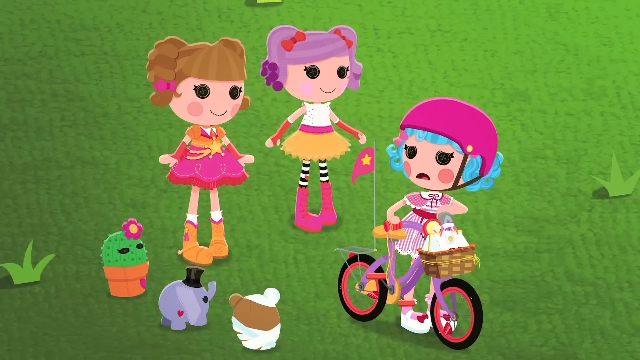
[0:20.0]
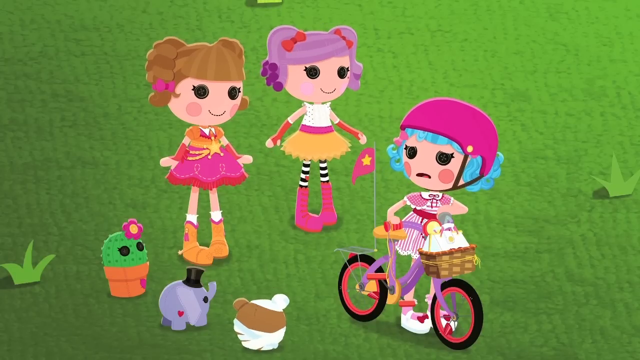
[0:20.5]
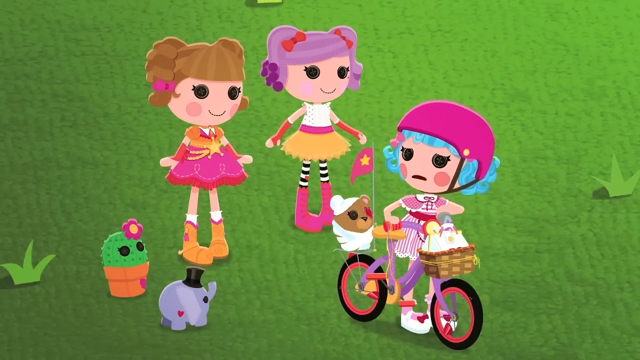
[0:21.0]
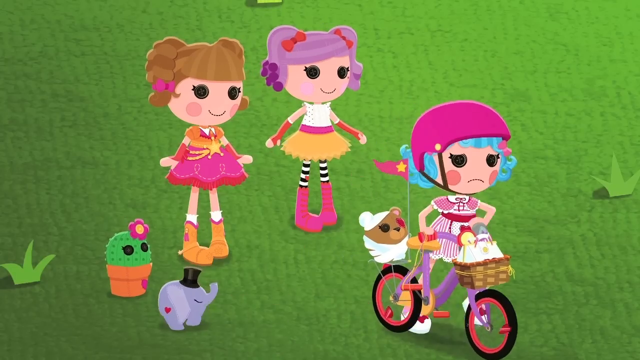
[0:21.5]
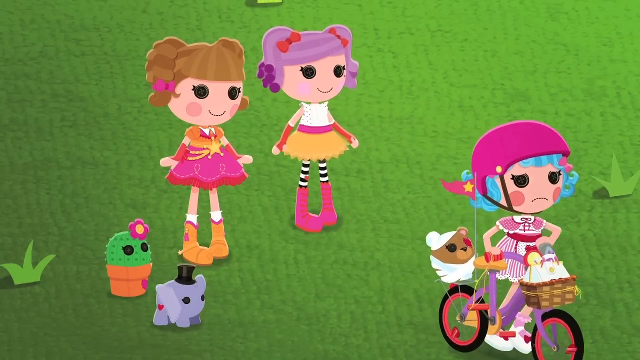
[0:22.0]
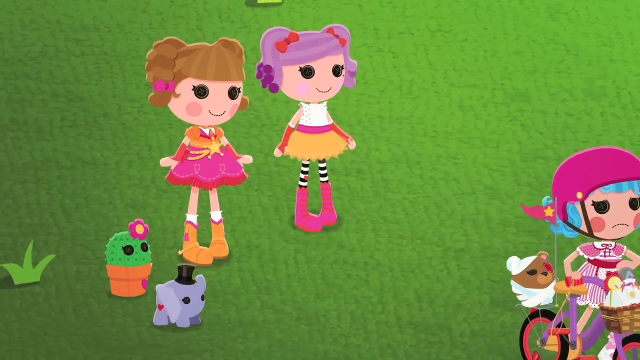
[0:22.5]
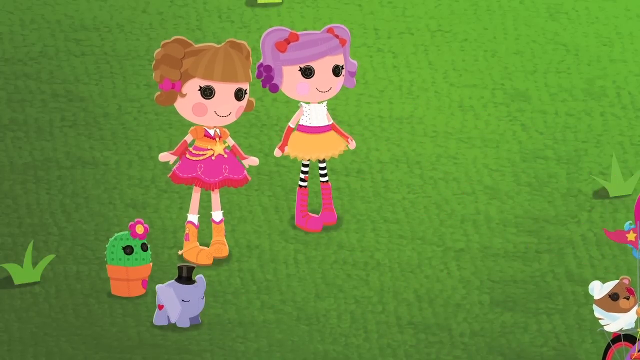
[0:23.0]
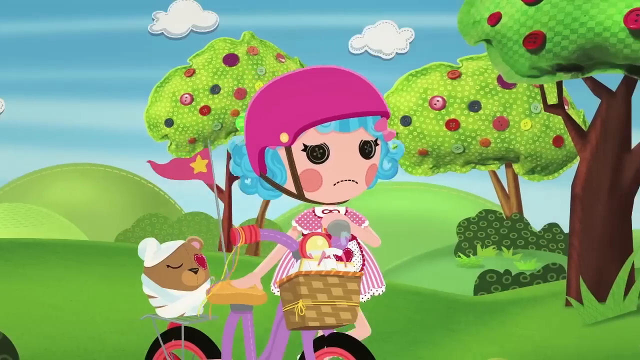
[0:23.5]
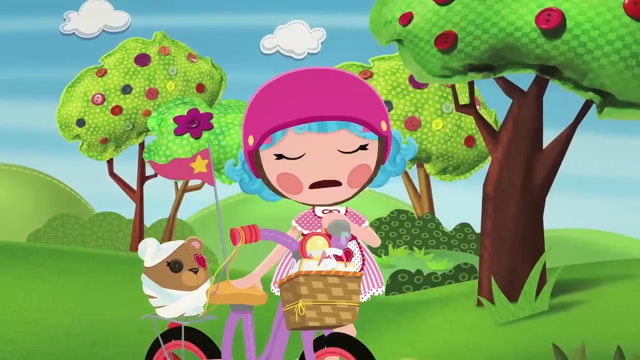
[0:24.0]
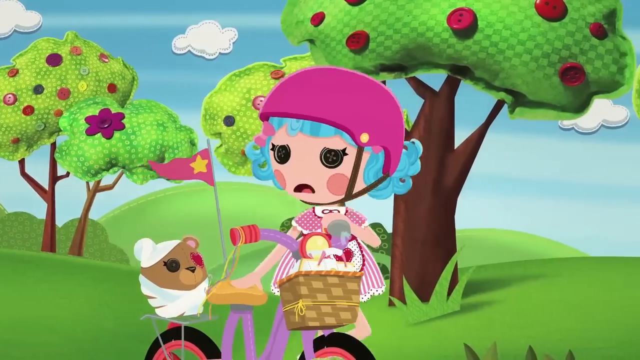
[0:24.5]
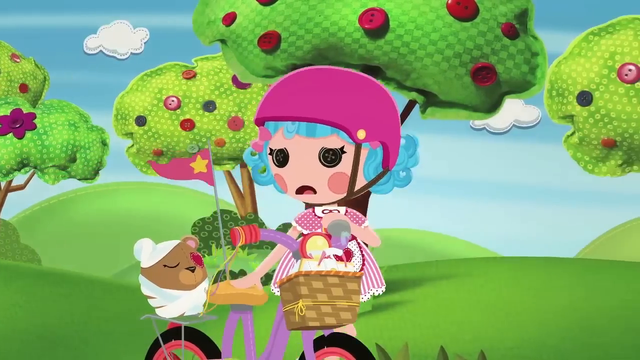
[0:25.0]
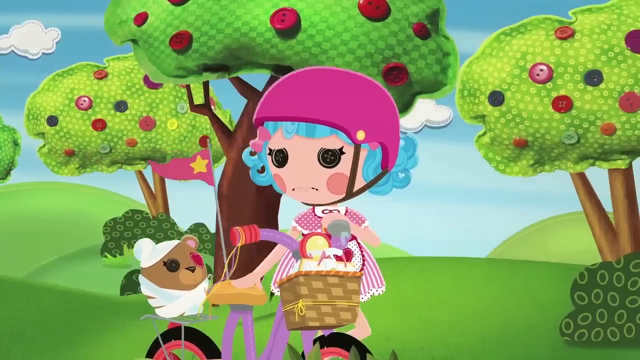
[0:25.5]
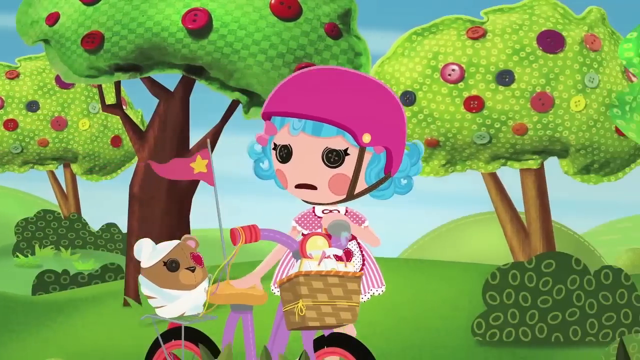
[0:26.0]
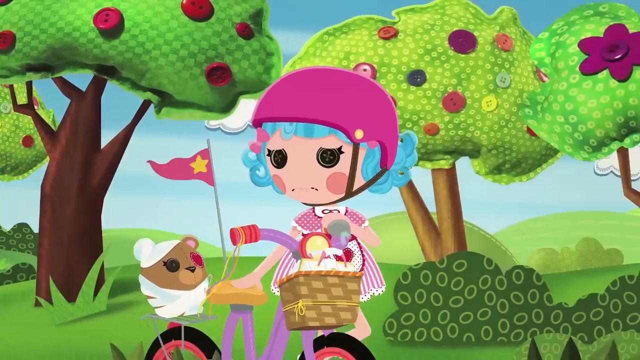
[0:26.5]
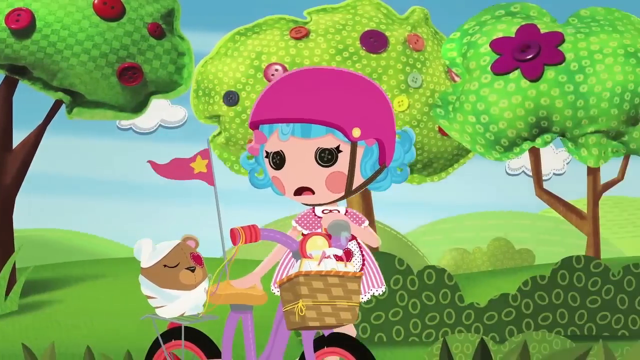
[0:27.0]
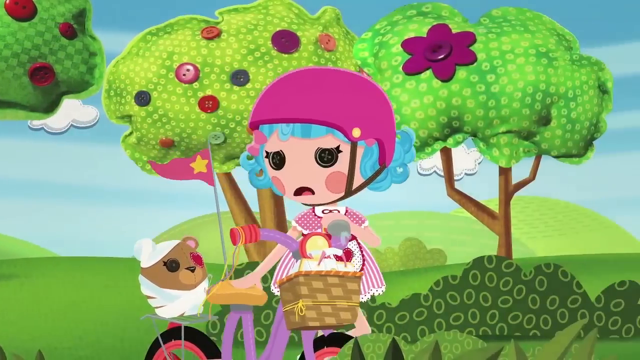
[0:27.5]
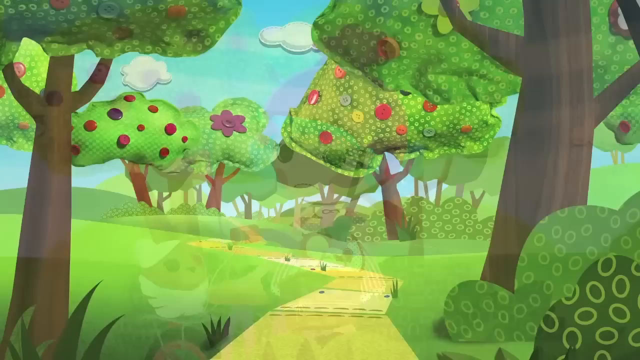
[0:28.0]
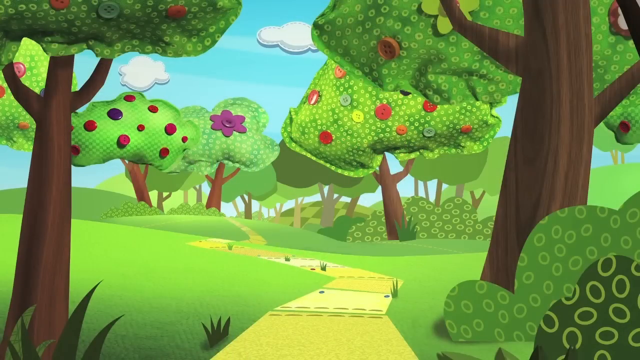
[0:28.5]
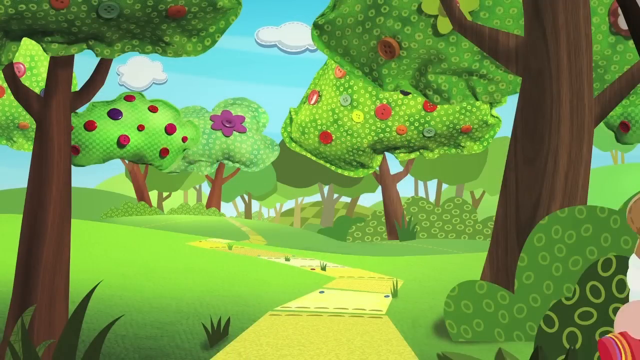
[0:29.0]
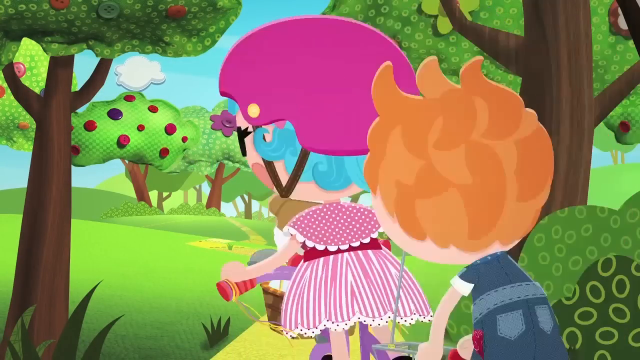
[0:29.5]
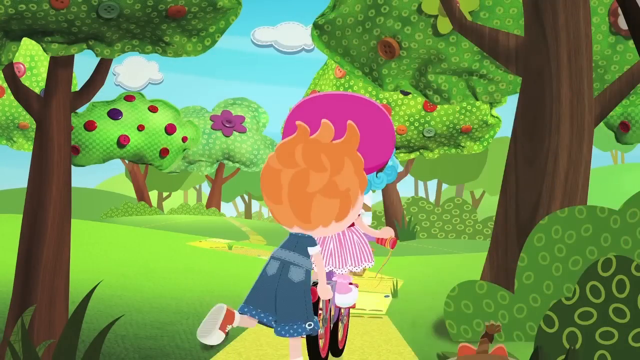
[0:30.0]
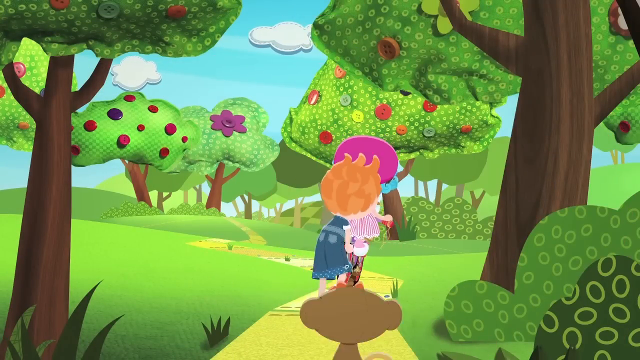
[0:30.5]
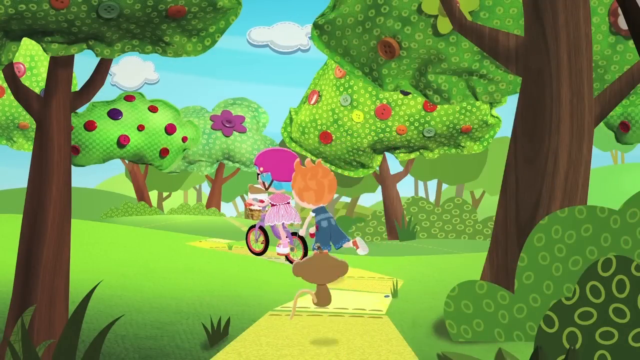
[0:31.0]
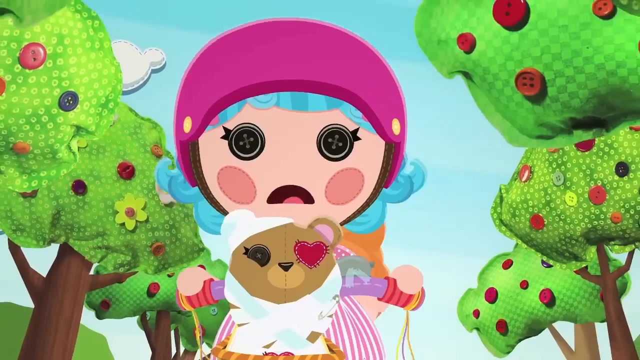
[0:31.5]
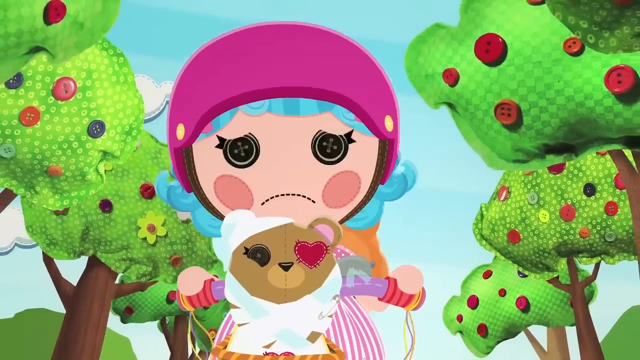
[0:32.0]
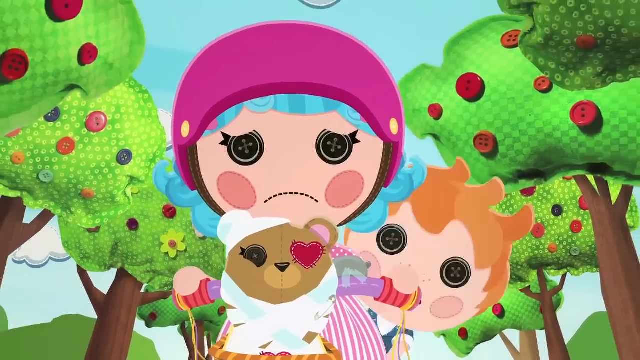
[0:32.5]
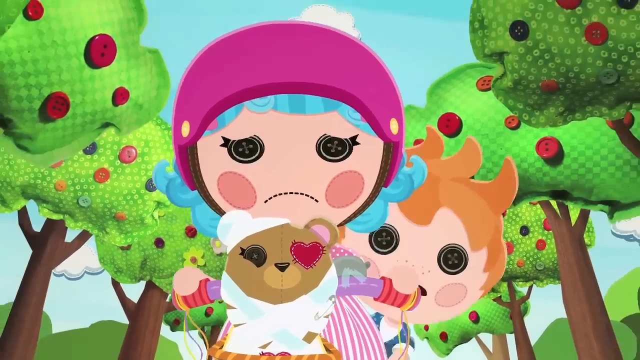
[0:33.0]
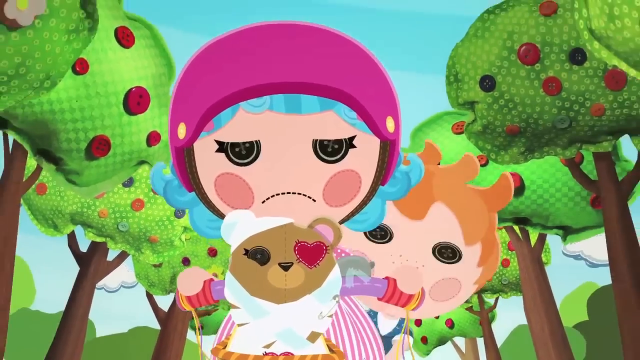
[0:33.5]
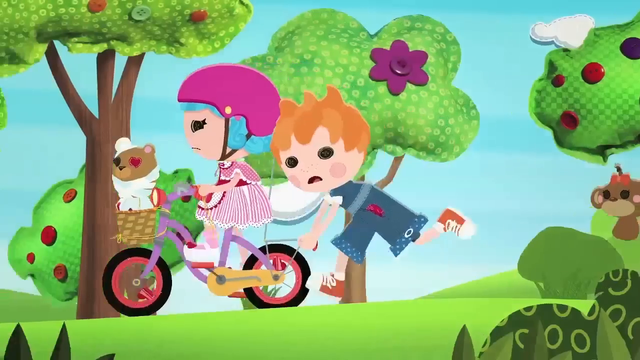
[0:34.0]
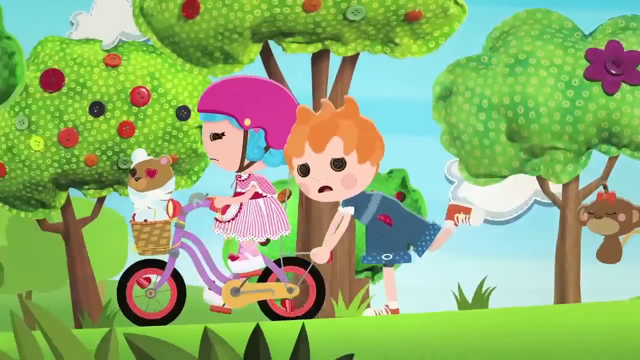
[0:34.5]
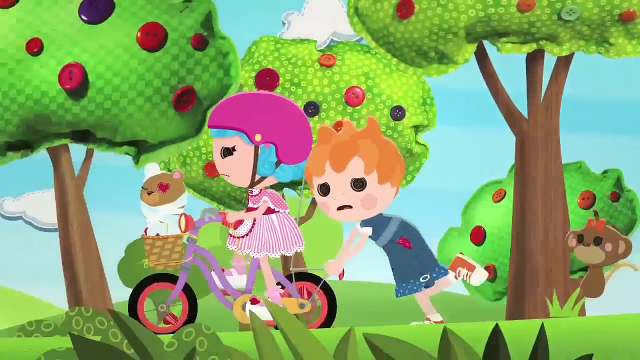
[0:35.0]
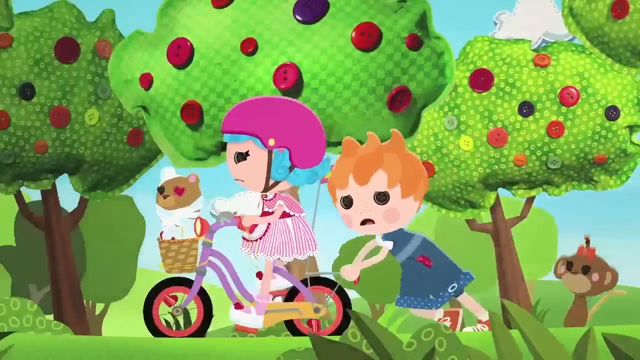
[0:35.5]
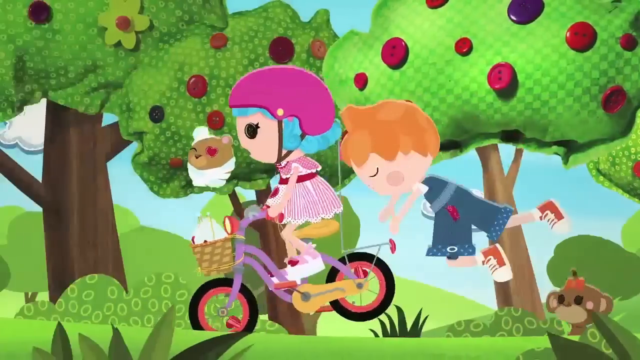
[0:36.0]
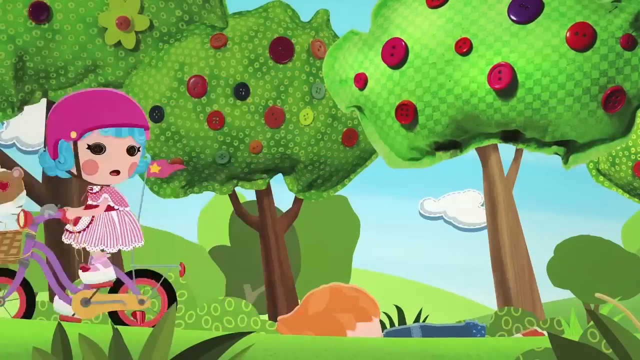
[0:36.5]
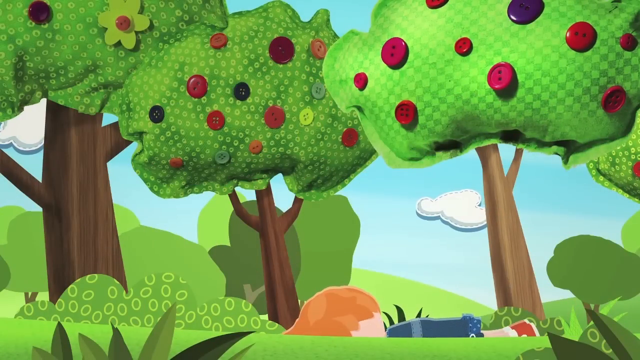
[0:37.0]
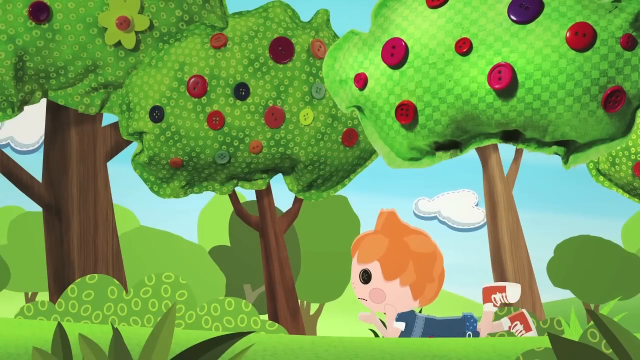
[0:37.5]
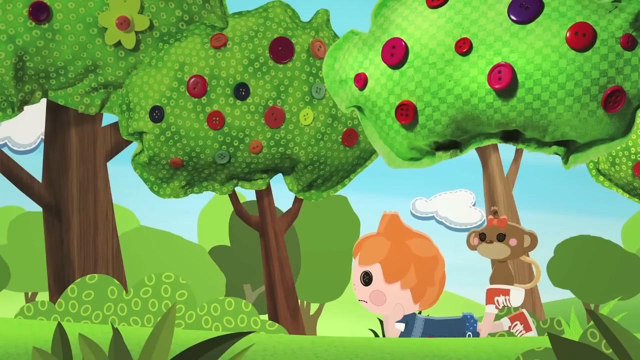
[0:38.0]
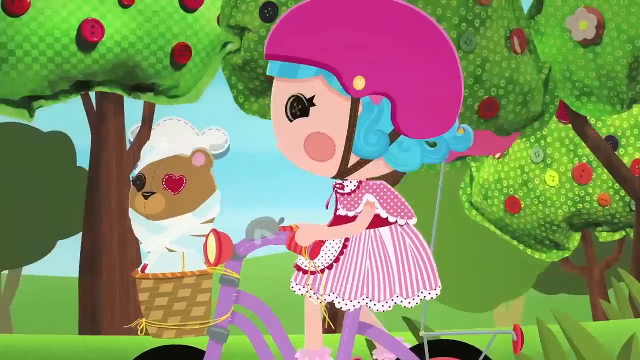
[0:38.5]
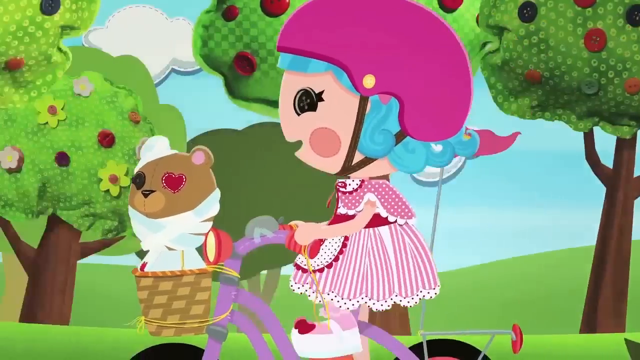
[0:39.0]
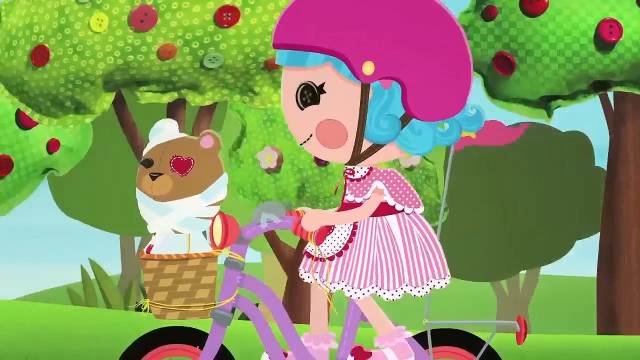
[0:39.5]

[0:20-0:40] The three animated doll characters with buttons for eyes are still shown. The character with the bike begins to walk off, away from the other two, and seems very sad. As she walks away, she talks to her teddy bear, which is in the back of the bike. The scene transitions to her on the bike with her bear in front, while a boy animated in the same style pushes her along a path in the forest. He begins to converse with her, then falls off the bike and lands on his face. The animation is brightly colored, 2D, kid-friendly and very green. A monkey follows along as well. As the boy falls on his face, the girl on the bike has a smile on her face and is now happy rather than sad.